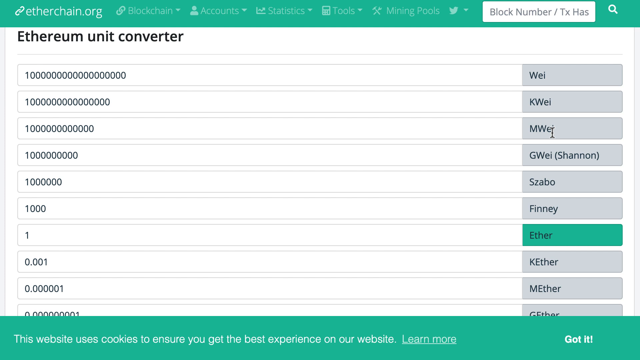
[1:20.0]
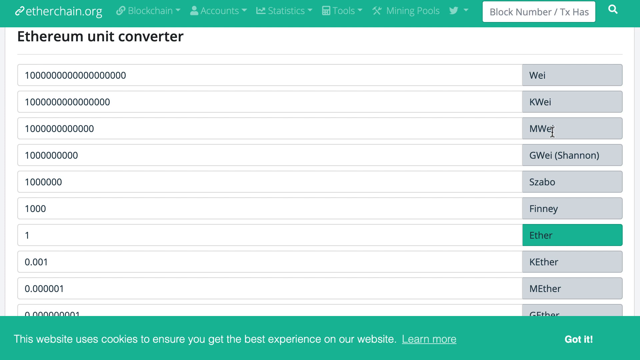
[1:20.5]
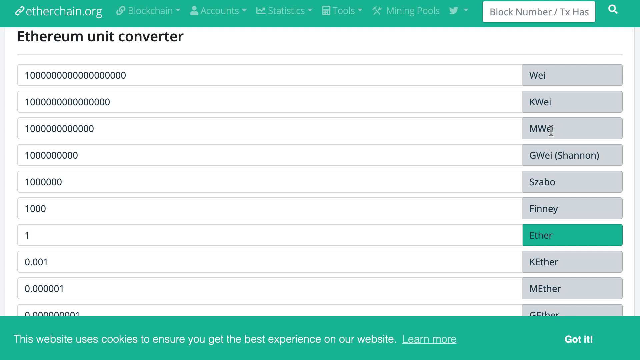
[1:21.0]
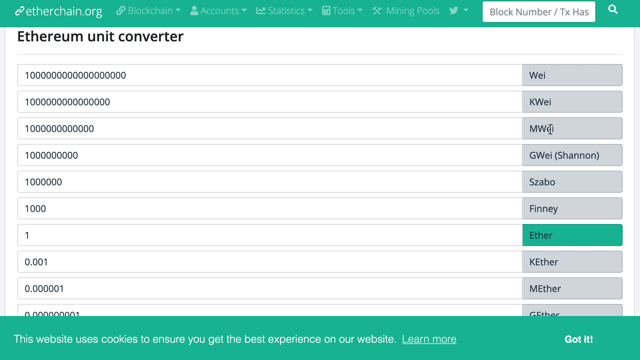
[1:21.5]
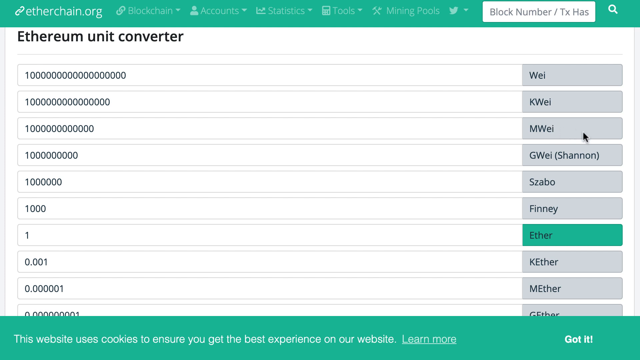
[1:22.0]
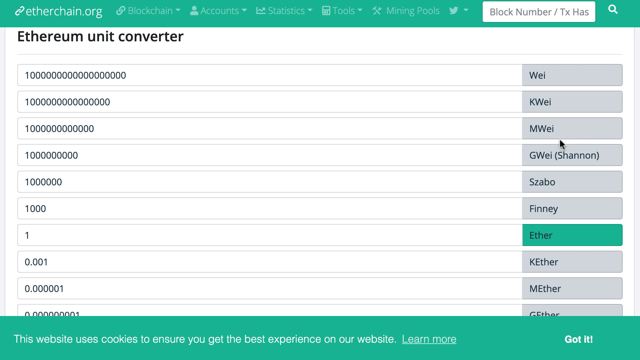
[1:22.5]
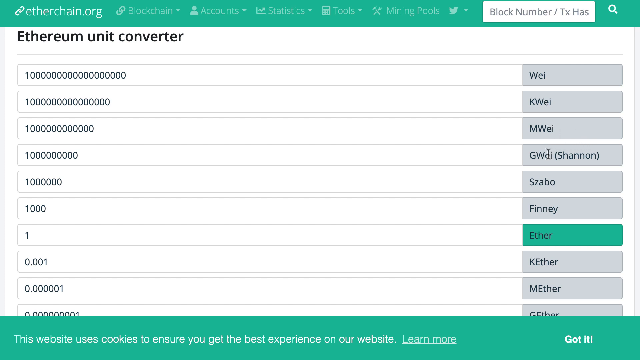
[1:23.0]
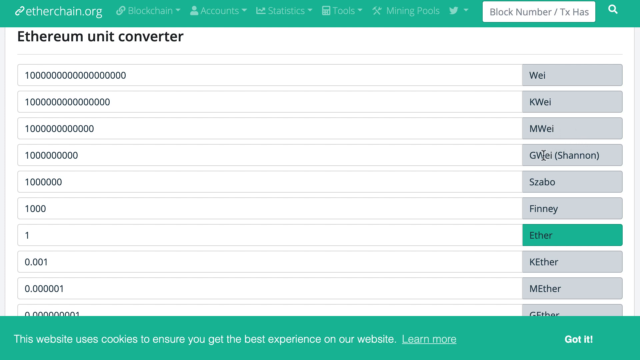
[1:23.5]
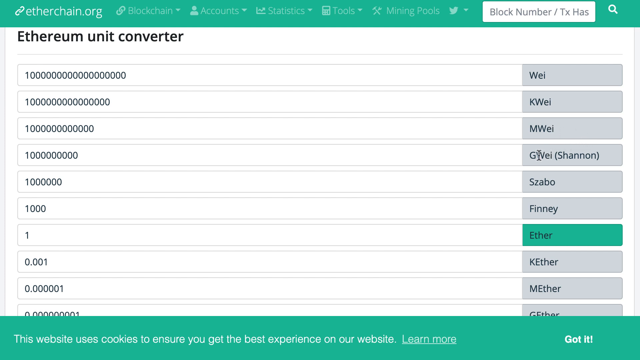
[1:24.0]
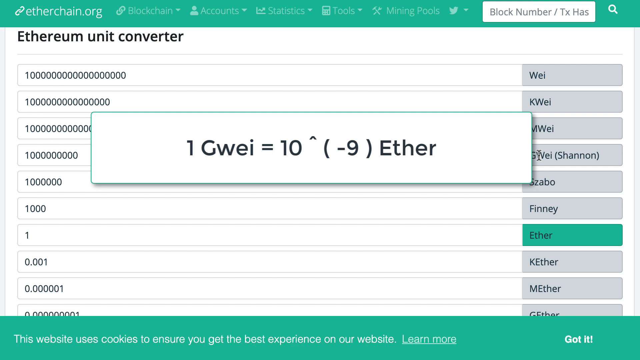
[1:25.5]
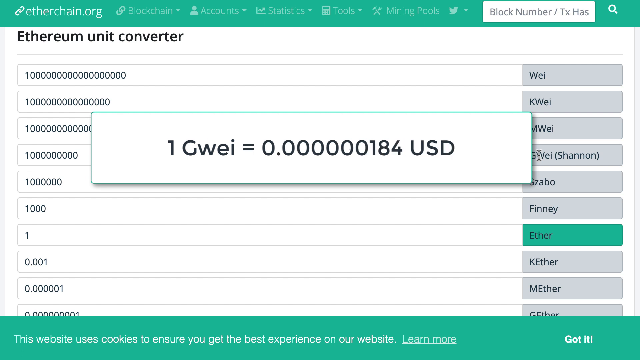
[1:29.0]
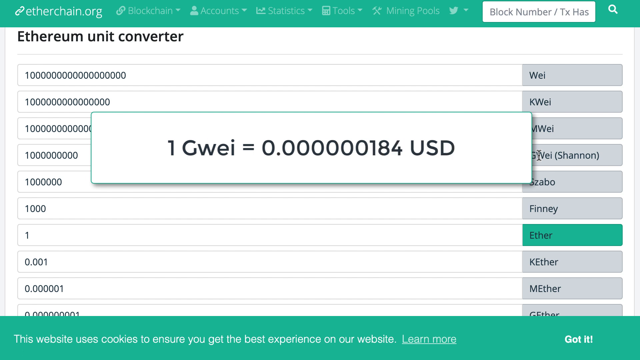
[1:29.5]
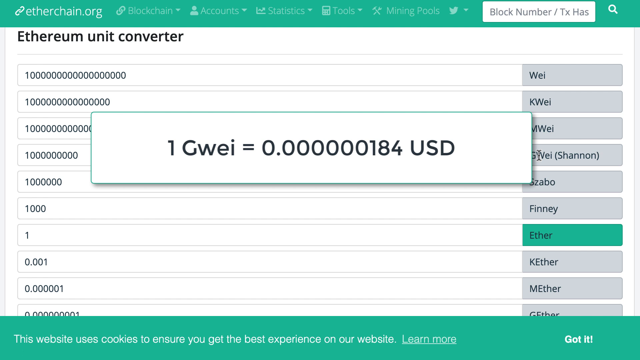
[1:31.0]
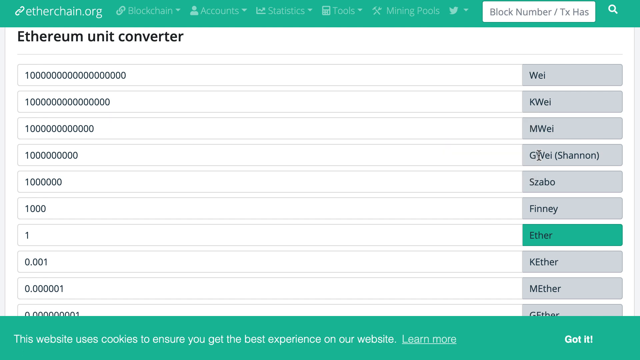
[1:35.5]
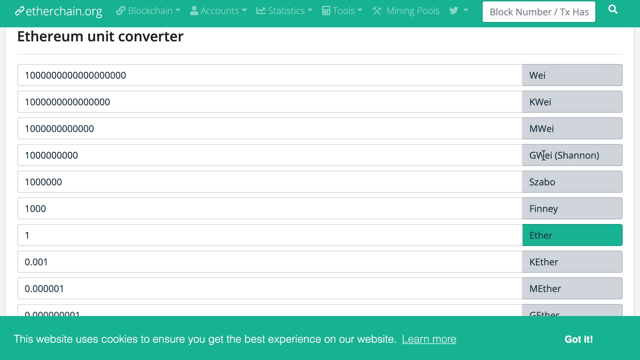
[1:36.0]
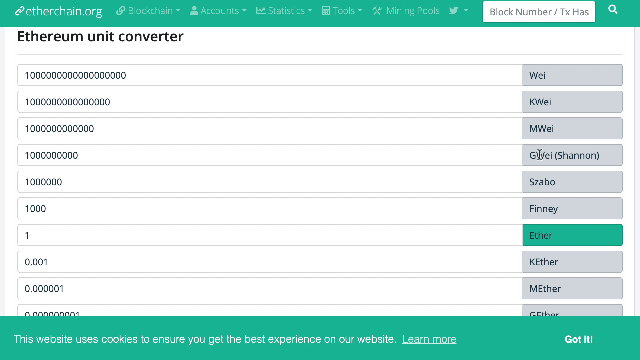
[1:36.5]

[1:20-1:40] The Ethereum unit converter page shows different numbers on the left in long, skinny rectangles. On the right, gray boxes start at the top and list unit names, including Shannon and Finney. All the boxes are gray except the one for ether, which is green. A cursor moves down, and a box appears in the middle saying "one gwei = 0.000000184 USD". The box then drops down and disappears, and the video ends on the same background page with the skinny rectangles and gray boxes.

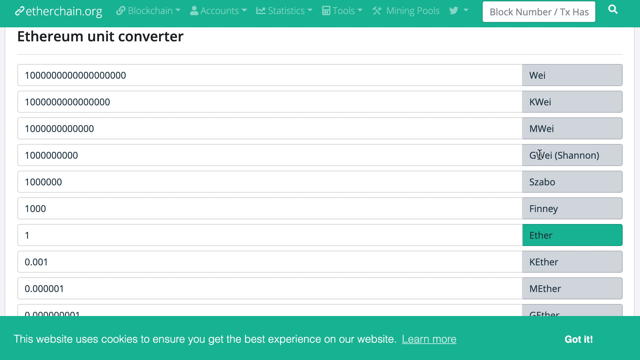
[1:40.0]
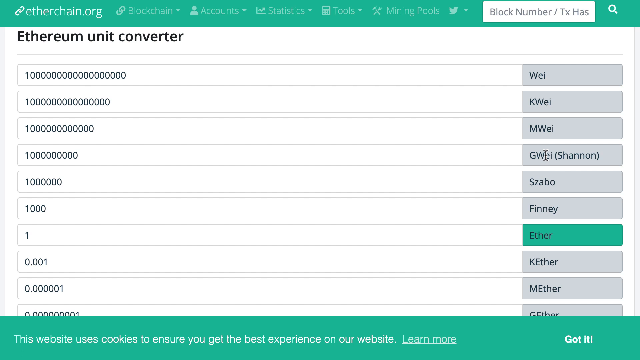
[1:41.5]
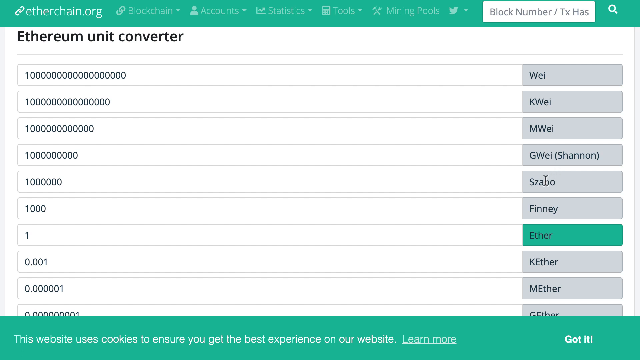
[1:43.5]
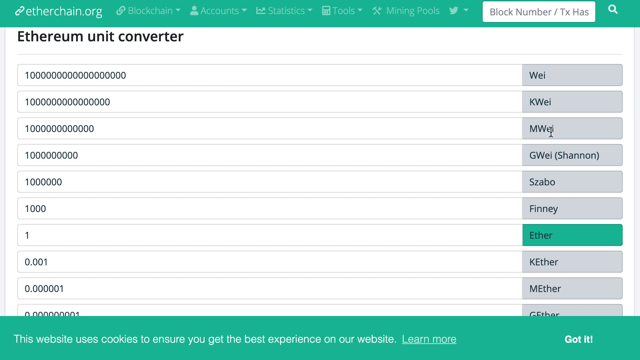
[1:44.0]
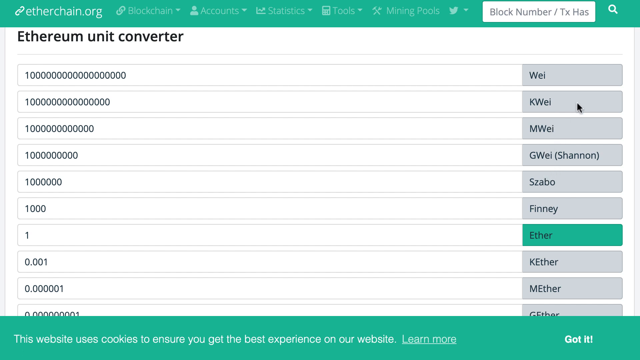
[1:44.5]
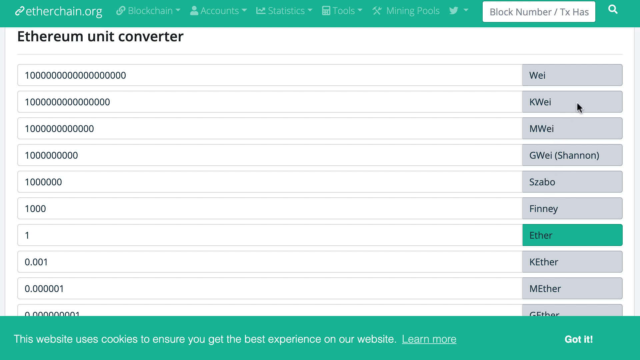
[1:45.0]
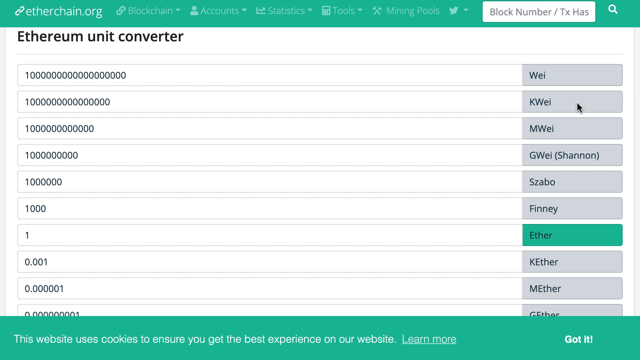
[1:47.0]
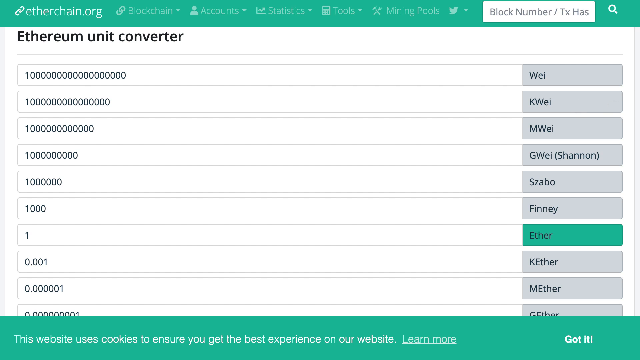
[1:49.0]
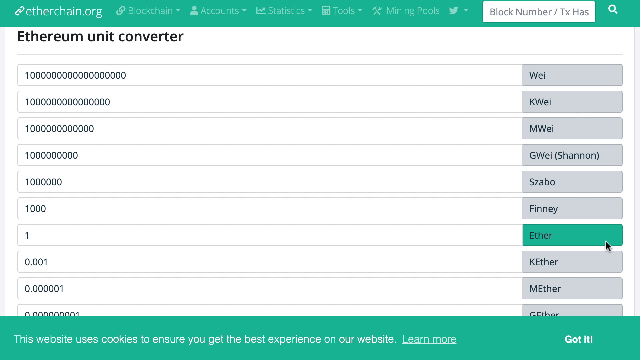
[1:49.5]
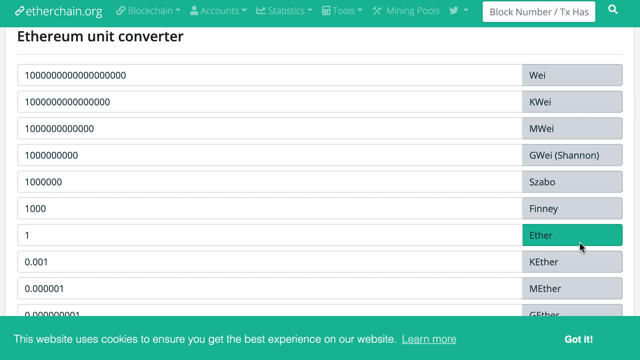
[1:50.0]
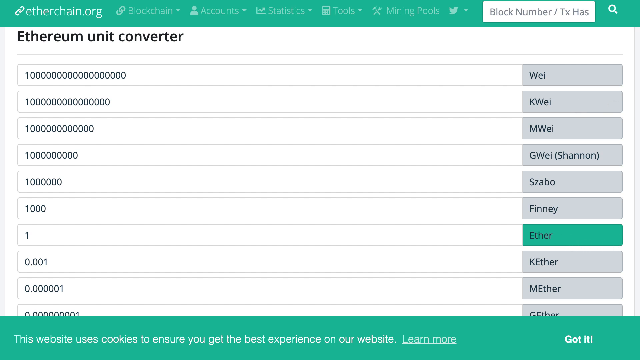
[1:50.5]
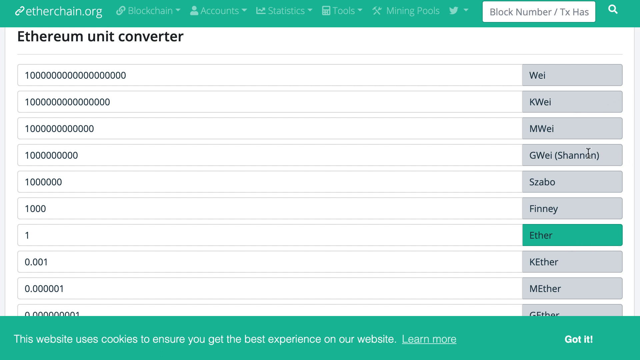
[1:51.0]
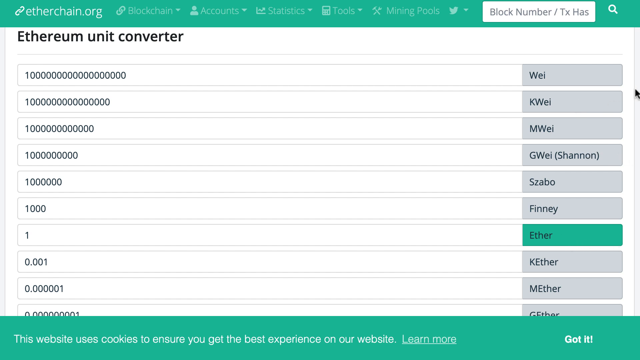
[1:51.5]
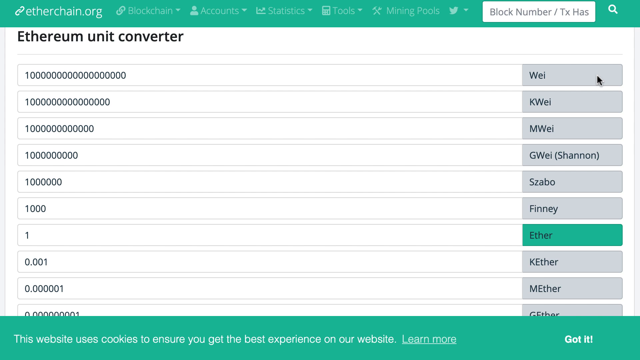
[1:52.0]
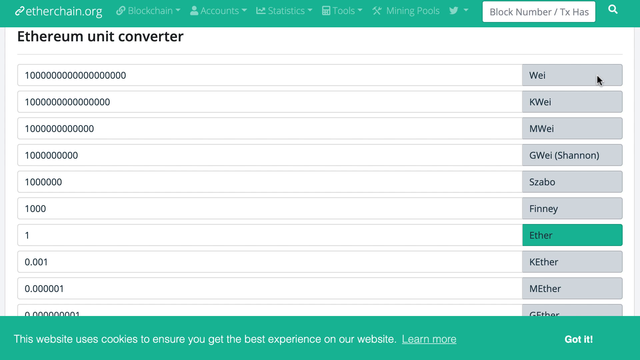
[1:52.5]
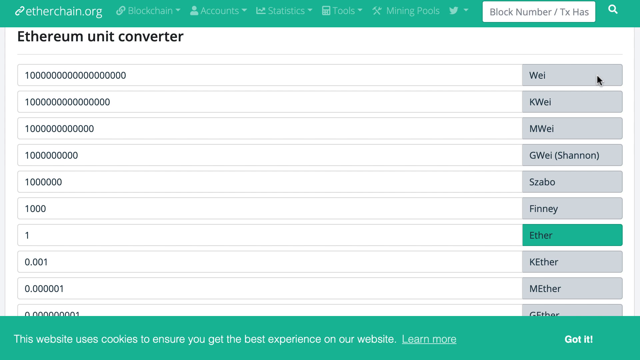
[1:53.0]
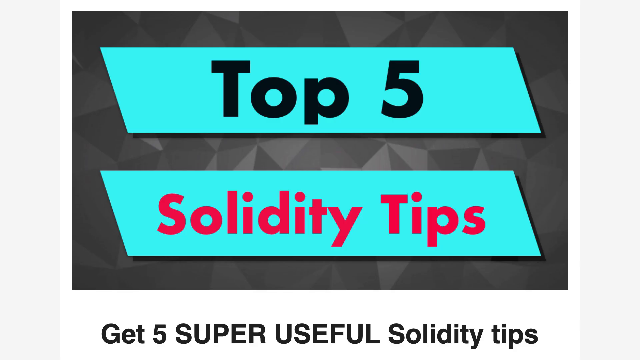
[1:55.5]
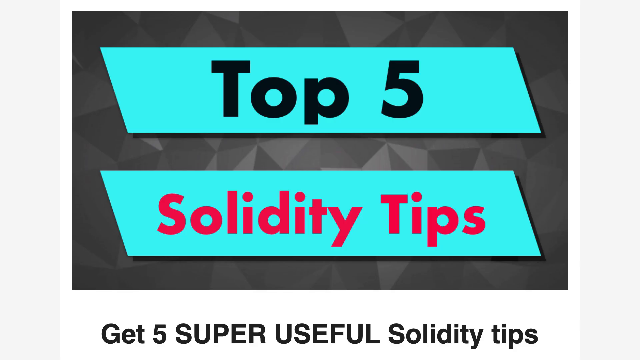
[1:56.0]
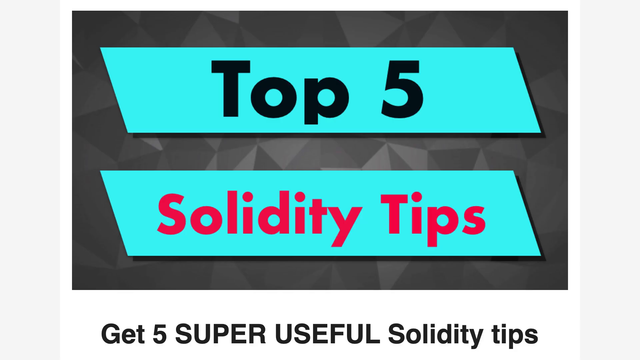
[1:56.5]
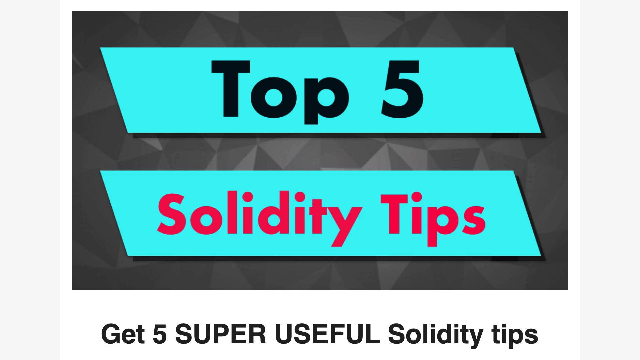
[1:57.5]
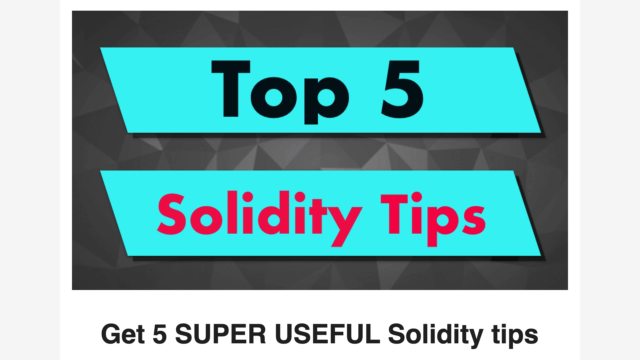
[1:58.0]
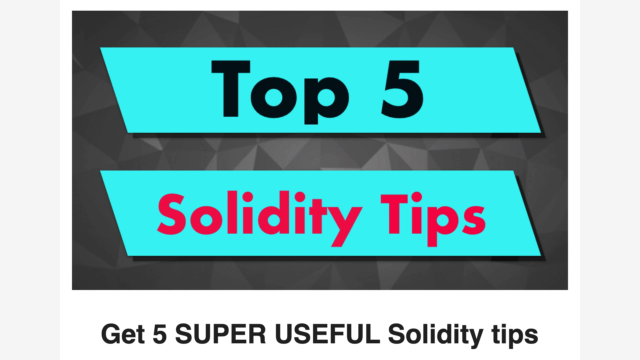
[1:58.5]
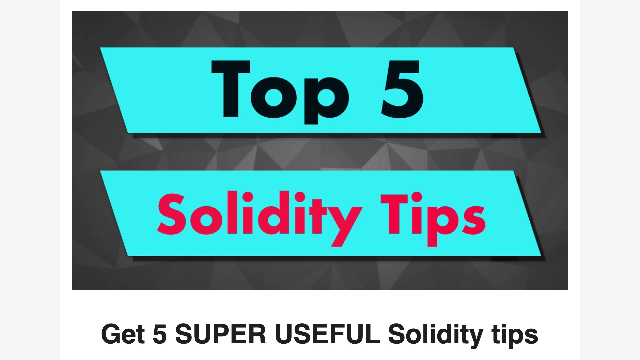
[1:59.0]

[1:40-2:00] A page shows the Ethereum unit converter. The upper part has a green rectangle filled with a few words and dropdown menus, and there is a white rectangle that says "block number/TX". Numbers run down the left side and gray boxes are on the right. A cursor shaped like a black arrow moves around. Then a sign pops up saying "top five solidity tips": "top" and "five" are in black print and "solidity tips" is in red print, on boxes that are teal parallelograms.